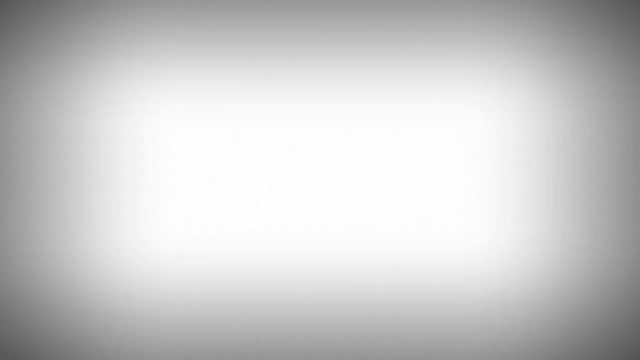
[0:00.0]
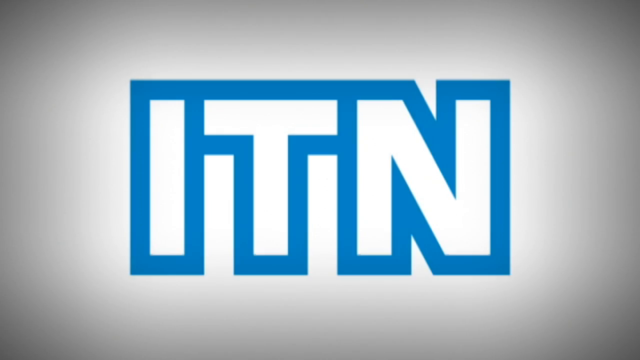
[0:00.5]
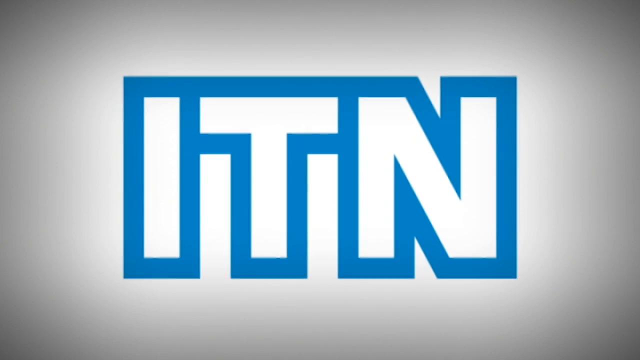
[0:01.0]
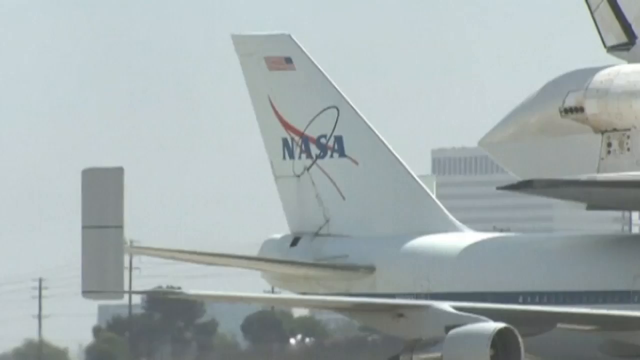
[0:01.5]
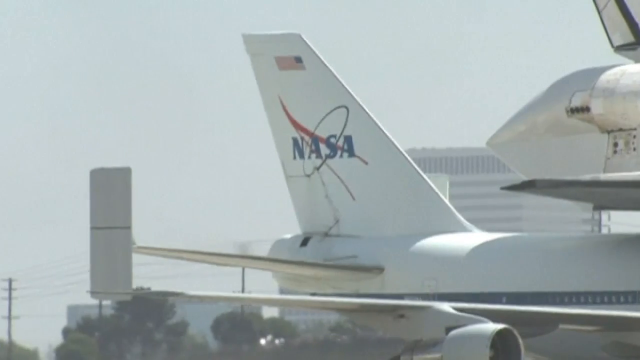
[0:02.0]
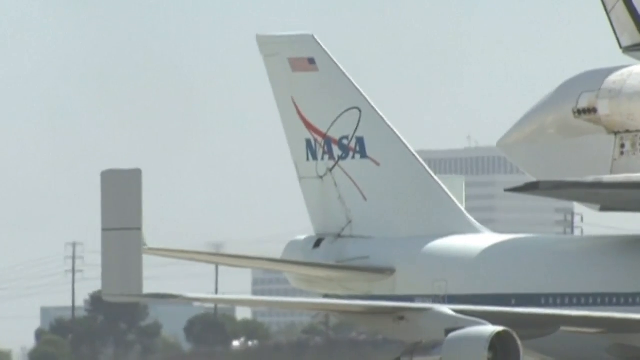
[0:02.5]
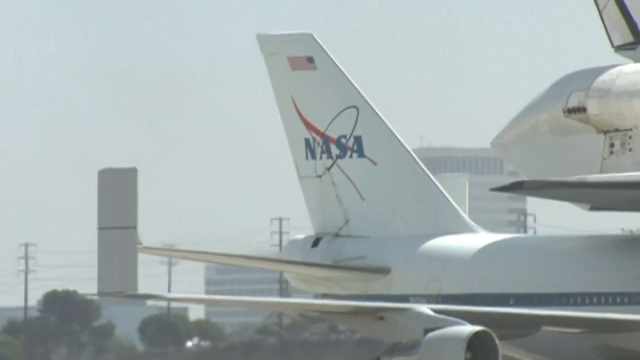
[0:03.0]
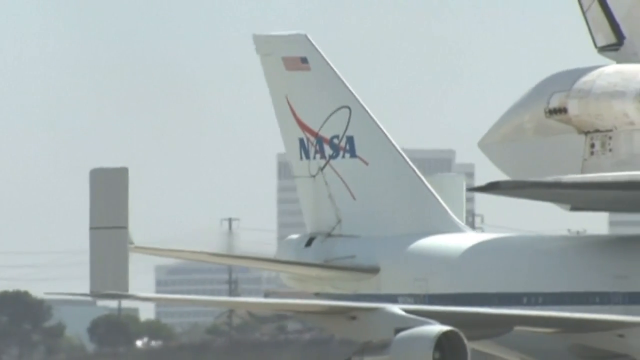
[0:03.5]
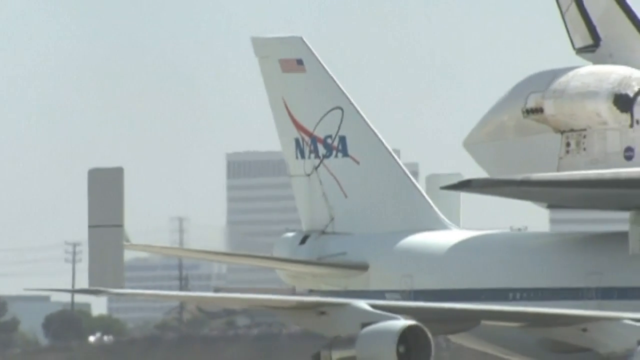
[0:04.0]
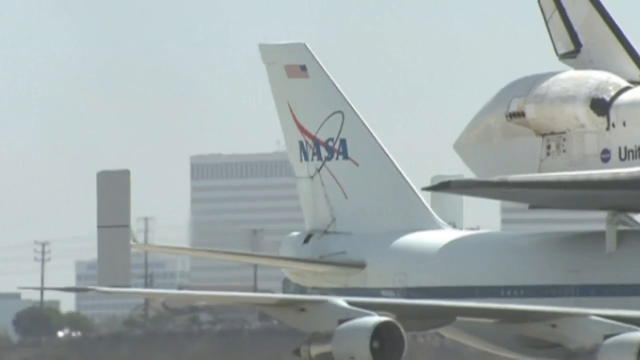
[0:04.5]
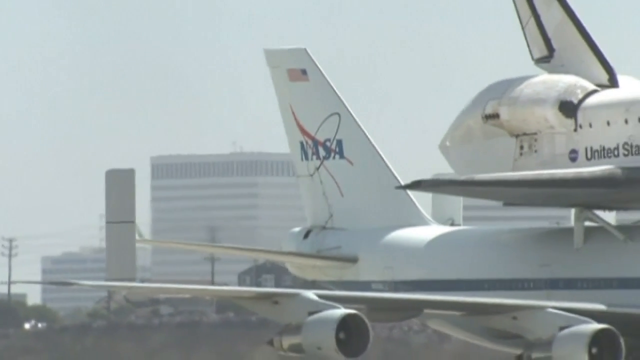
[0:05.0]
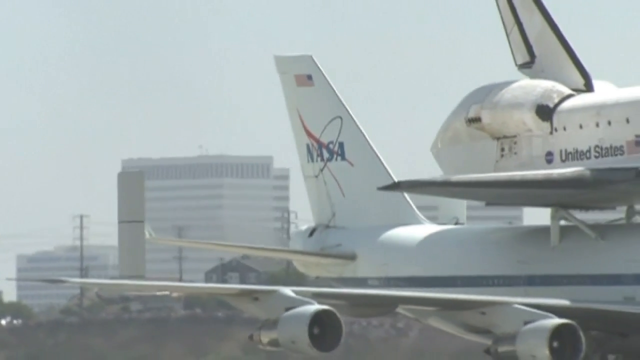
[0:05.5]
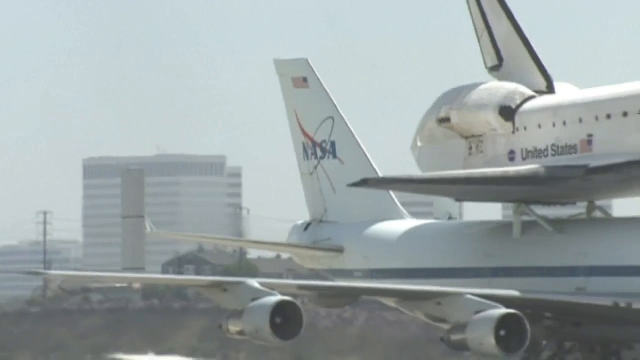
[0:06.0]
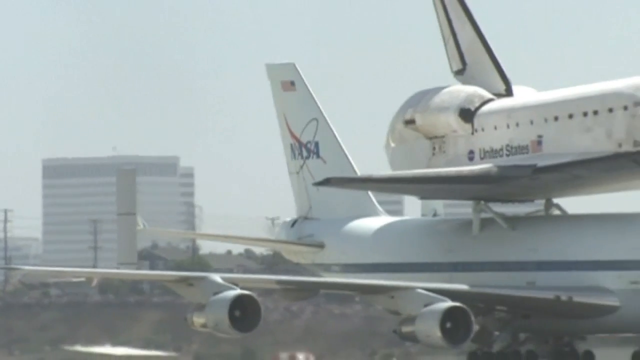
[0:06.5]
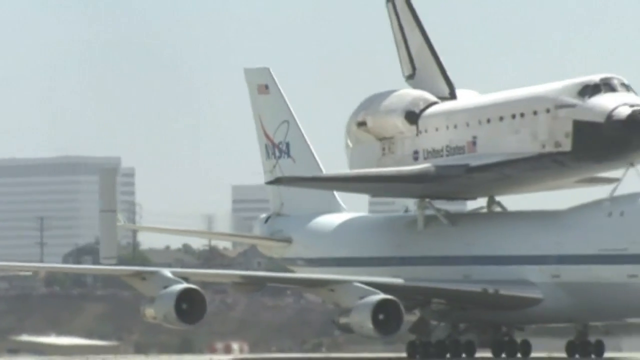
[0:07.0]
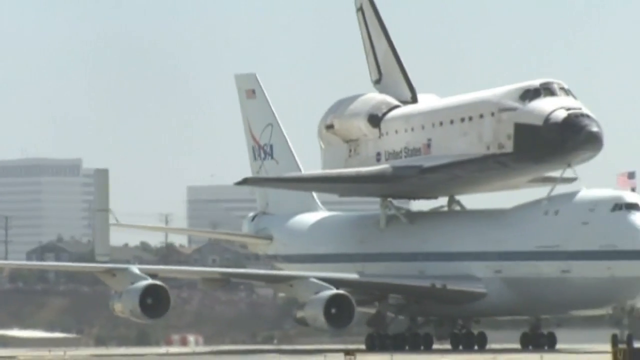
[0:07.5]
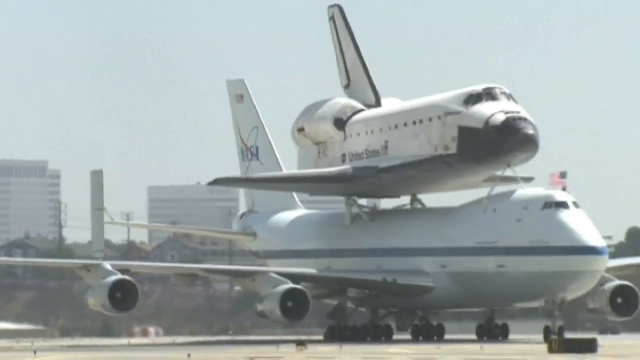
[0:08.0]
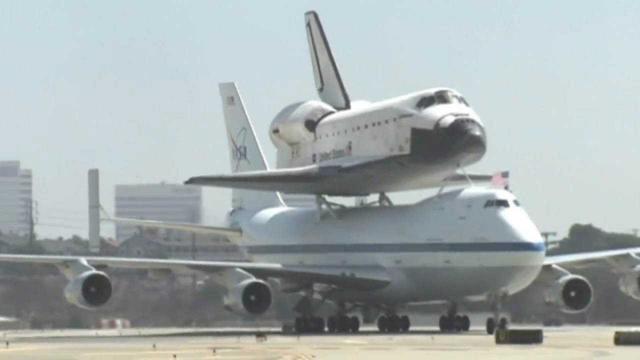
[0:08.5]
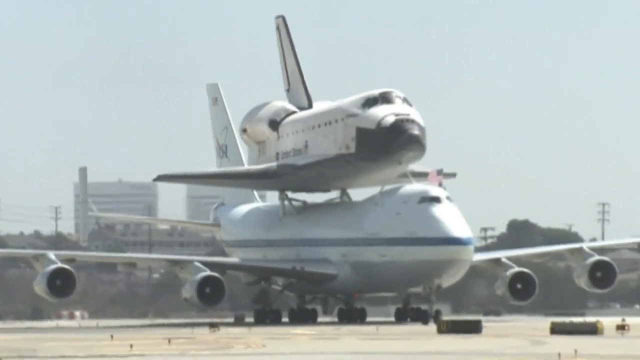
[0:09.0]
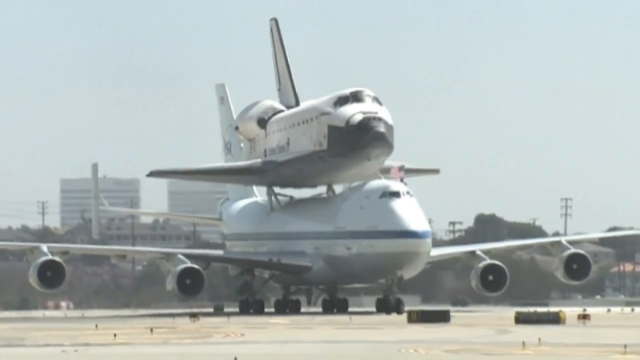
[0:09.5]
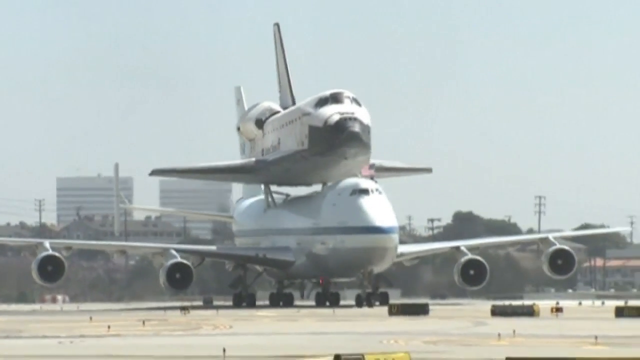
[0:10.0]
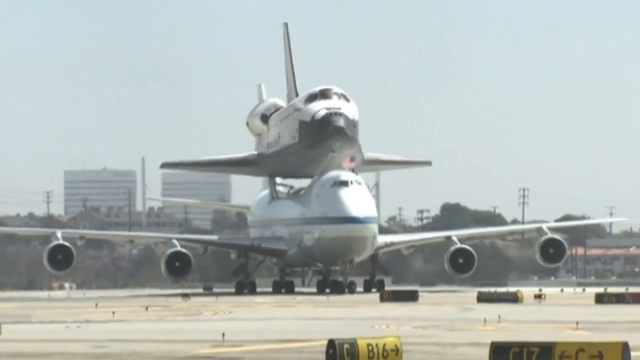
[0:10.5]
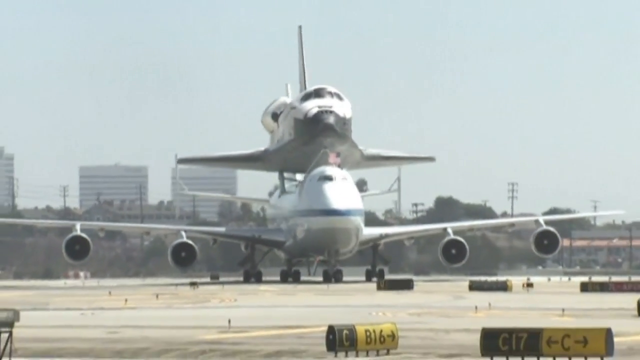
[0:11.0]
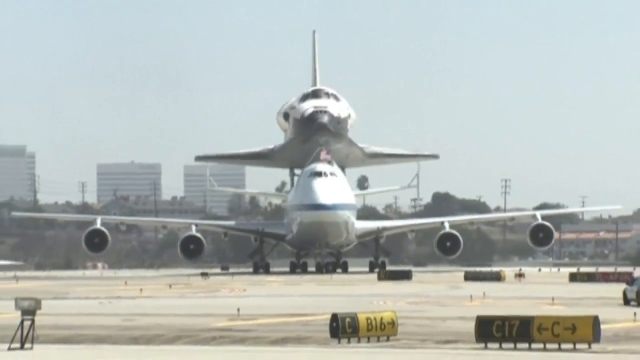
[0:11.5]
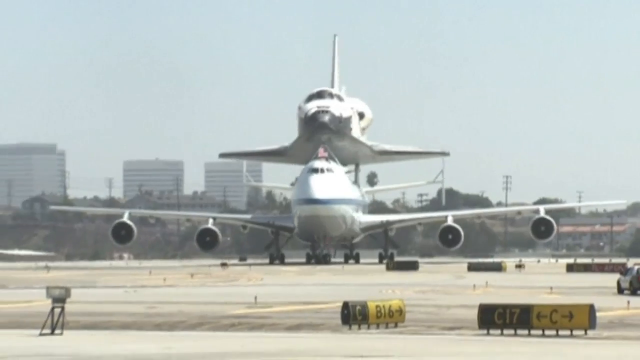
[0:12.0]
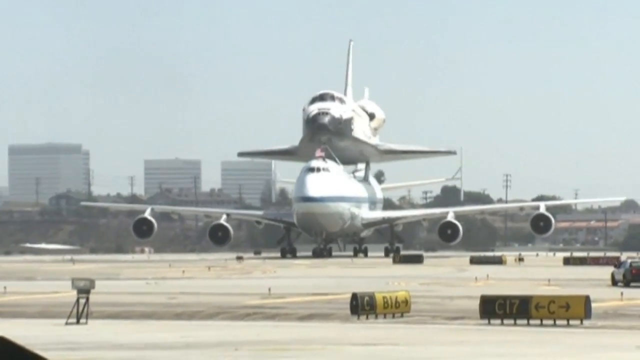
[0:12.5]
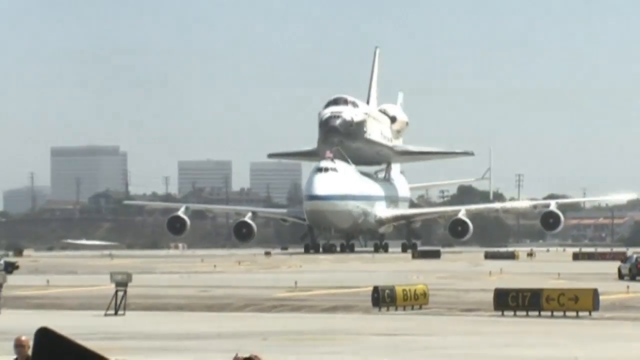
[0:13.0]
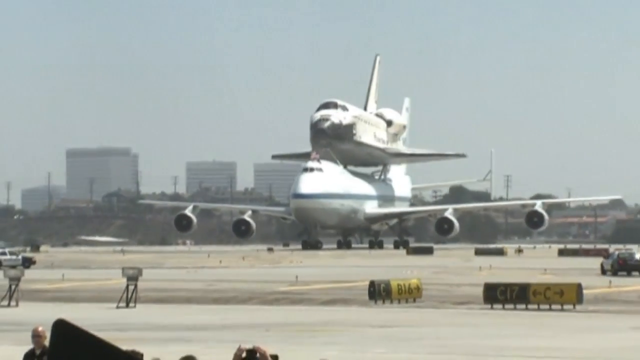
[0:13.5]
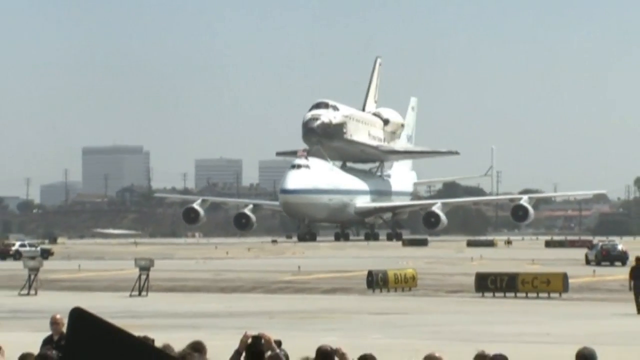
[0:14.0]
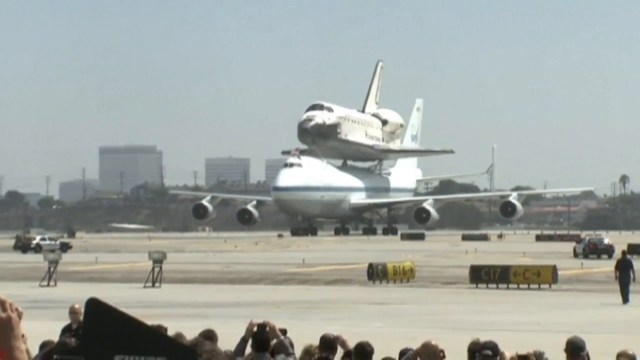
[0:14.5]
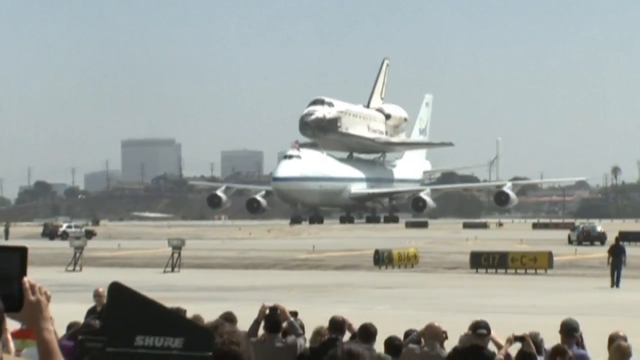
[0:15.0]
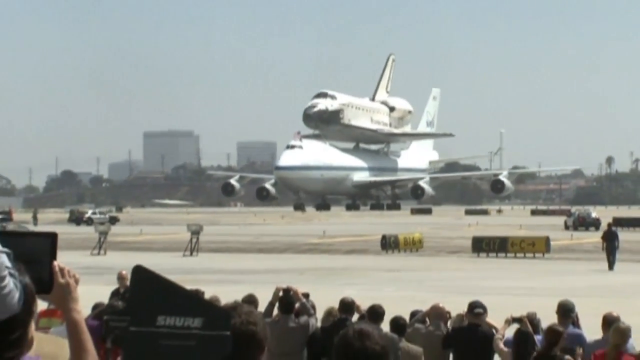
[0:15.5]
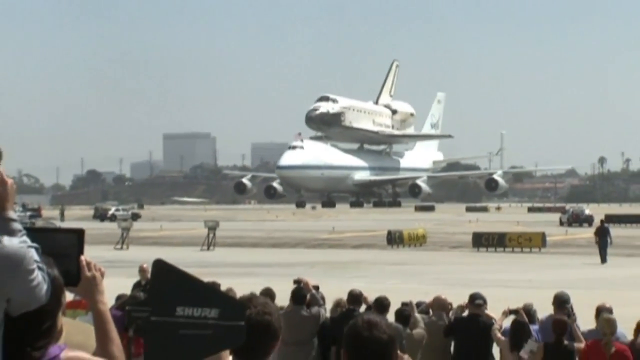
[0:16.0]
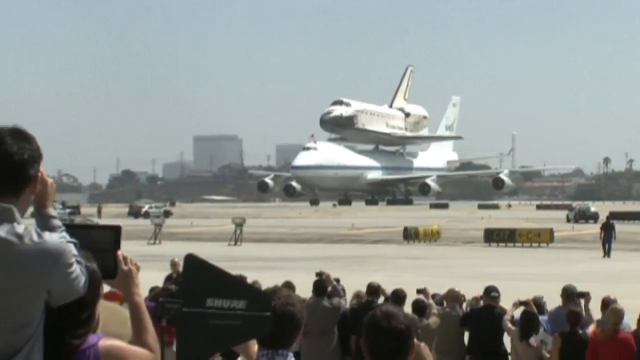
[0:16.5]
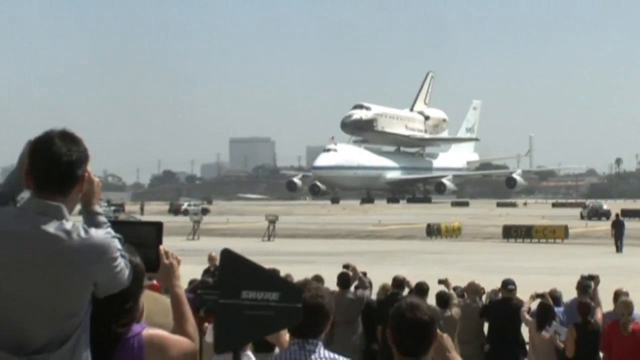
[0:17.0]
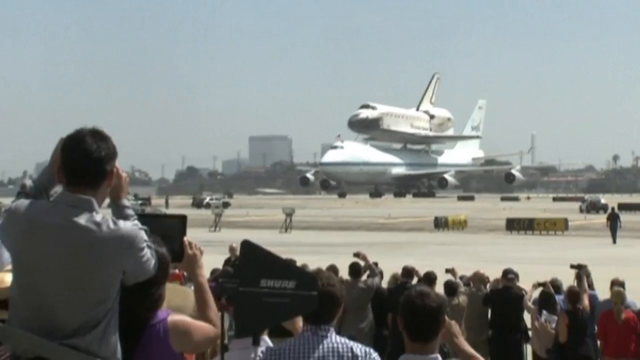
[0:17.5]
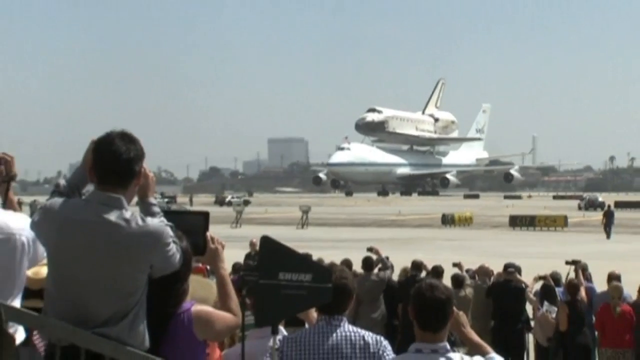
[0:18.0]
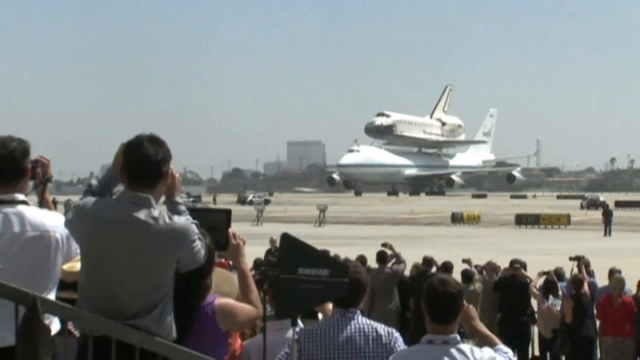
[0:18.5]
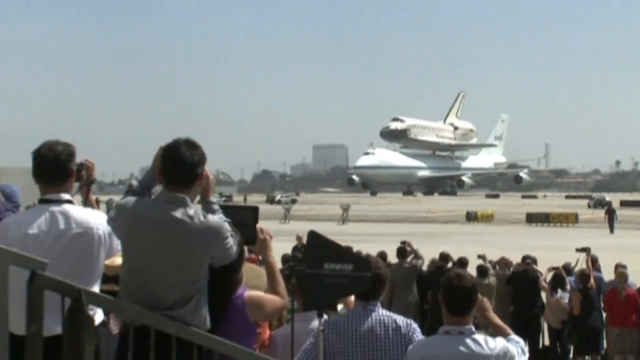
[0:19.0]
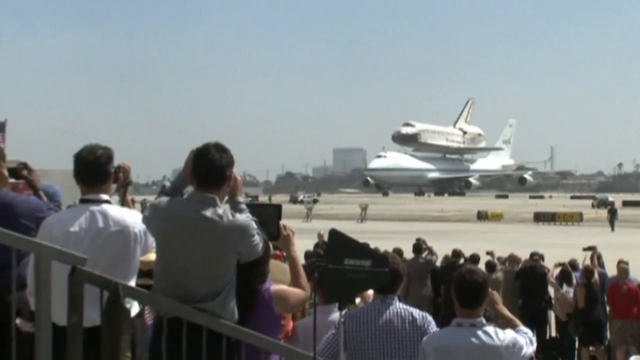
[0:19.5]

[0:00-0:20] The video opens with the ITN logo flashing on screen: white lettering surrounded by blue, with the blue border around each letter connecting them so the logo reads as one single unit. The view zooms in a little to a NASA aircraft, apparently a space shuttle; the video quality is not great. The tail comes into view, bearing the U.S. flag and NASA, with an oval-shaped ring around NASA. The aircraft seems to be churning and rotating a little. Halfway down, underneath the wing, a series of windows and a turbine engine are visible. Seen from the side, the tail and the double wings show. As it comes into view it turns out to be a regular airplane with turbine engines, with the space shuttle attached on top by brackets. The space shuttle is similar to the airplane, with wings just as big, no turbine engine sticking out, and a black nose; A-shaped brackets come out and hold it on top of the airplane. It is either foggy outside or the footage is old and grainy. The airplane rotates and comes to face the camera squarely. As the view zooms out, the sun shines on the right wing, and a couple of signs appear: a black and yellow sign reading "C-17" and another reading "CB-16". There are a couple of cars: a cop car on the right side, parked catty-corner to the plane, and what is apparently another cop car on the left side. A stand of people watches; someone holds a tablet. The view appears to be a first-person view from someone in the stands. A guy in the back, behind a woman in a purple shirt, is taking a picture of some kind, and on the left a couple of people in the stands are videotaping with smartphones.